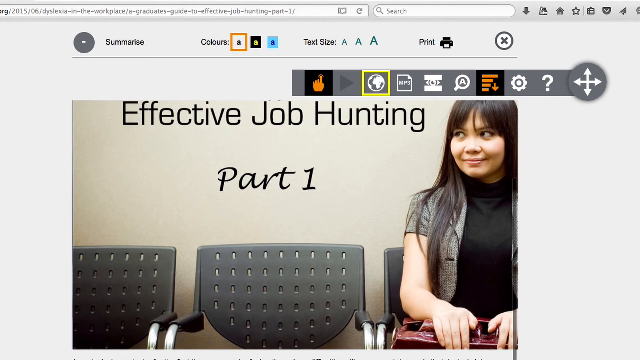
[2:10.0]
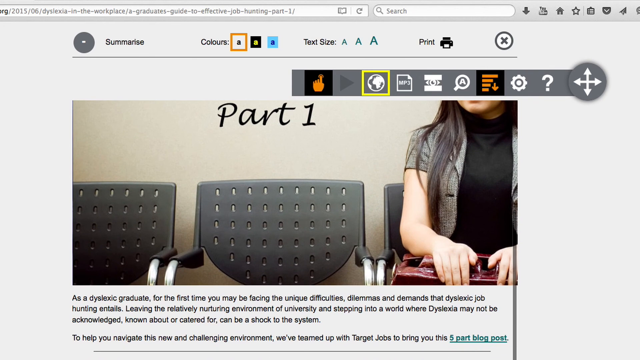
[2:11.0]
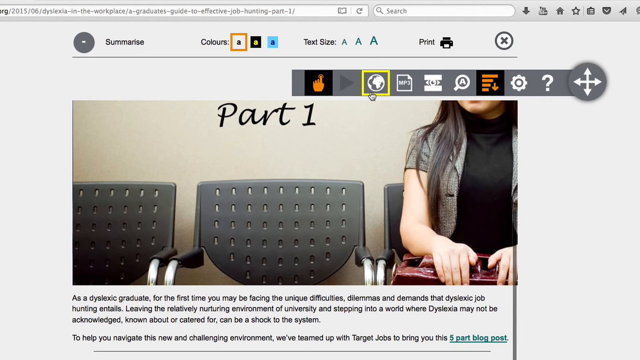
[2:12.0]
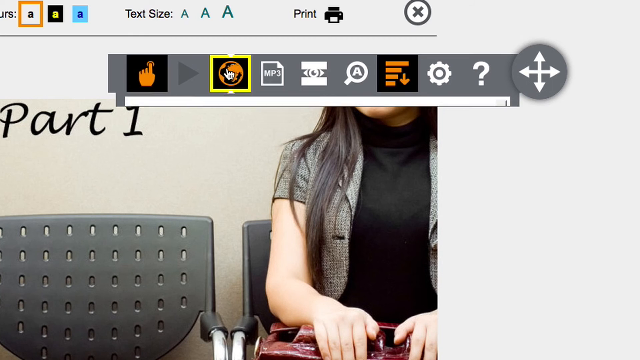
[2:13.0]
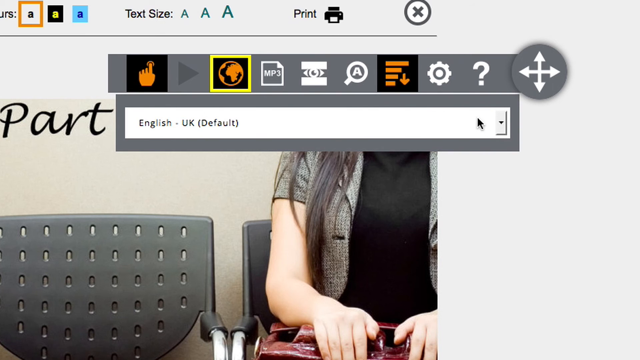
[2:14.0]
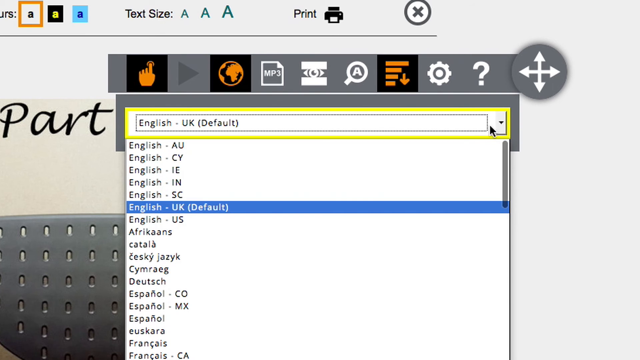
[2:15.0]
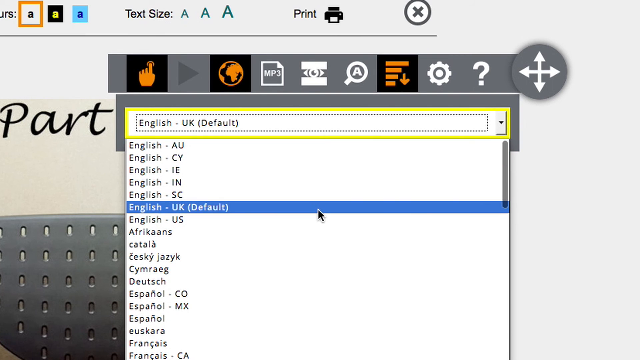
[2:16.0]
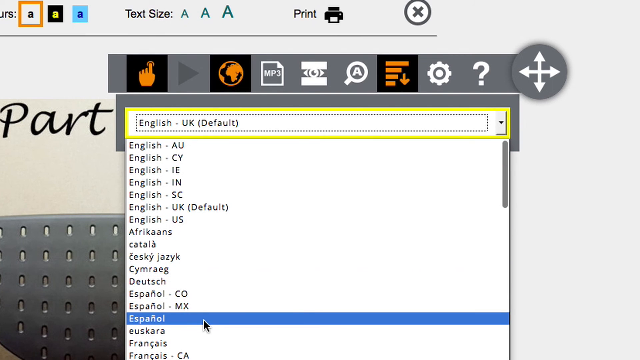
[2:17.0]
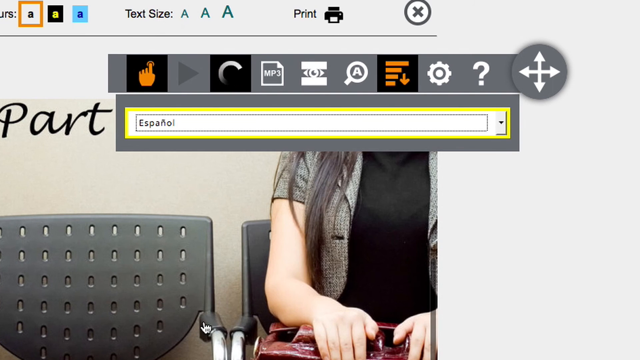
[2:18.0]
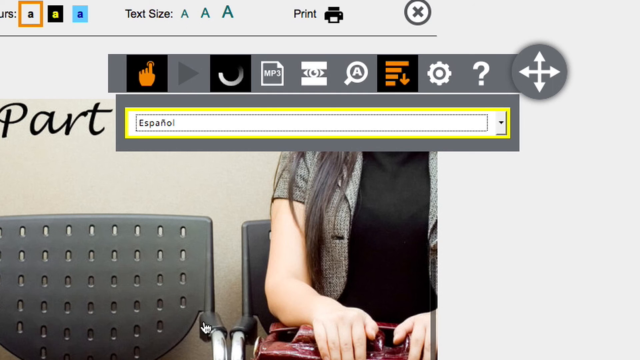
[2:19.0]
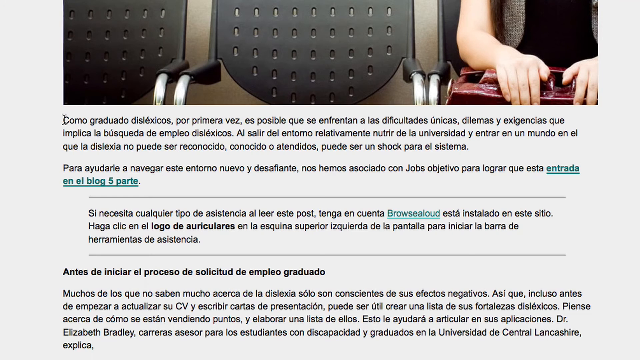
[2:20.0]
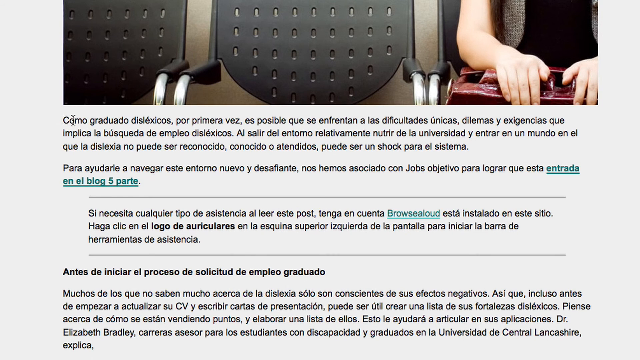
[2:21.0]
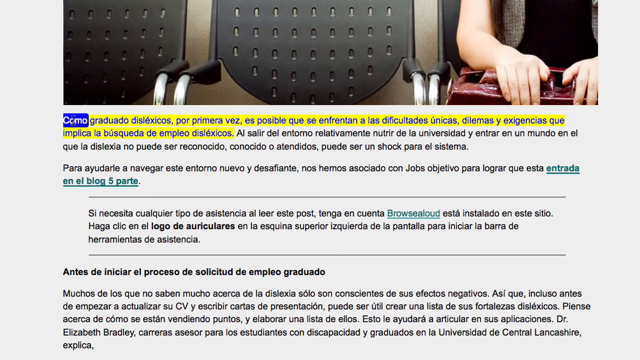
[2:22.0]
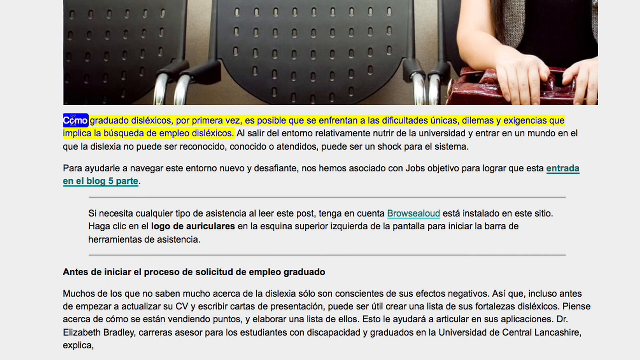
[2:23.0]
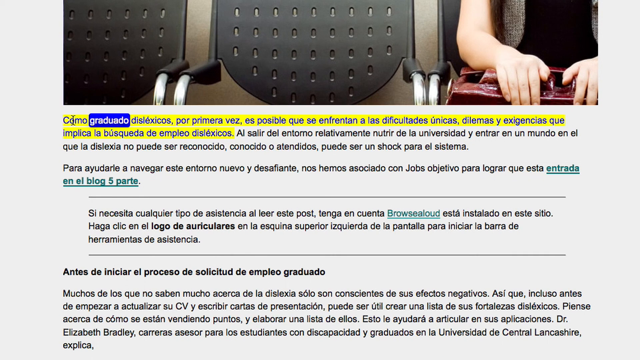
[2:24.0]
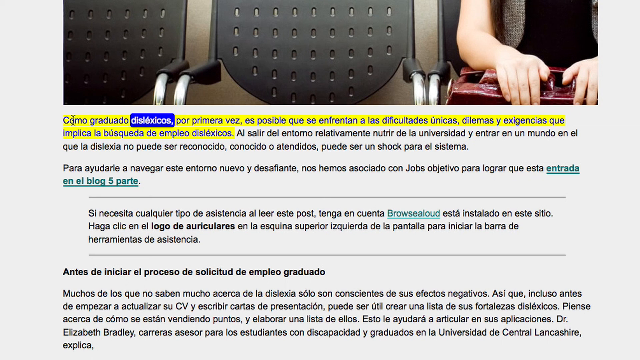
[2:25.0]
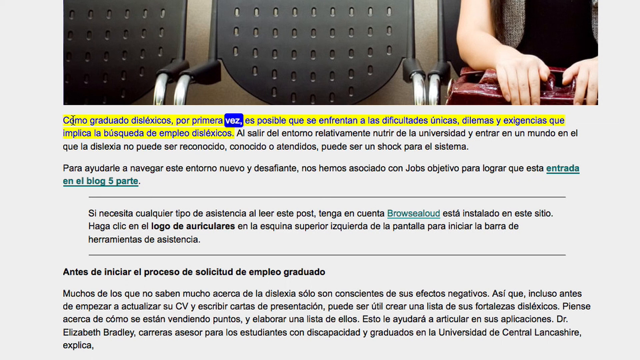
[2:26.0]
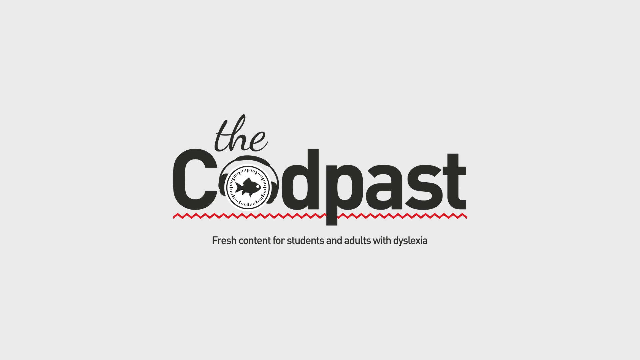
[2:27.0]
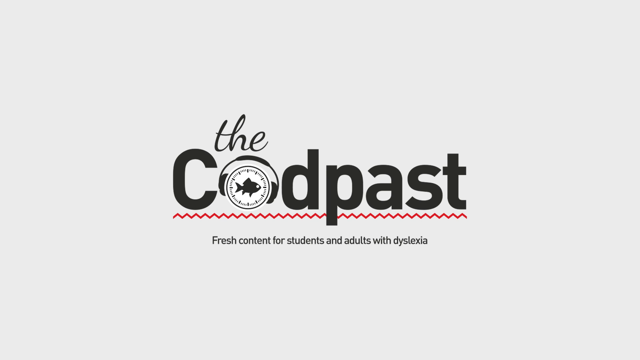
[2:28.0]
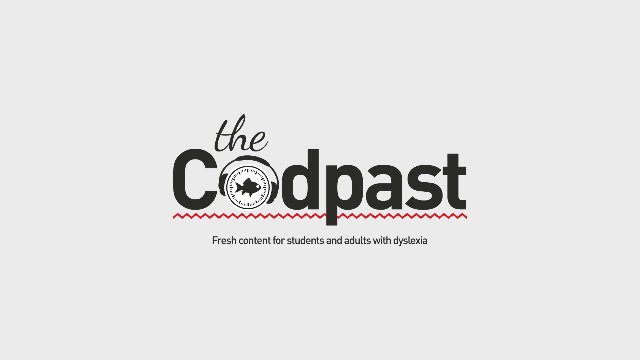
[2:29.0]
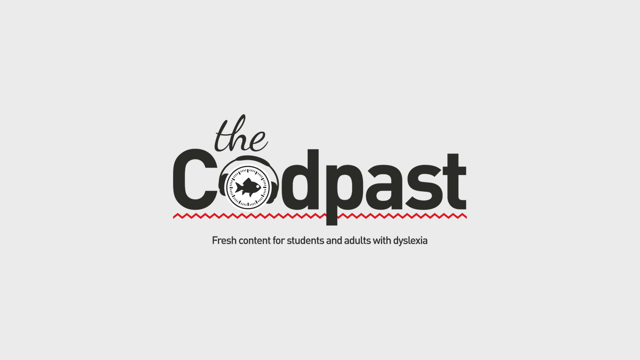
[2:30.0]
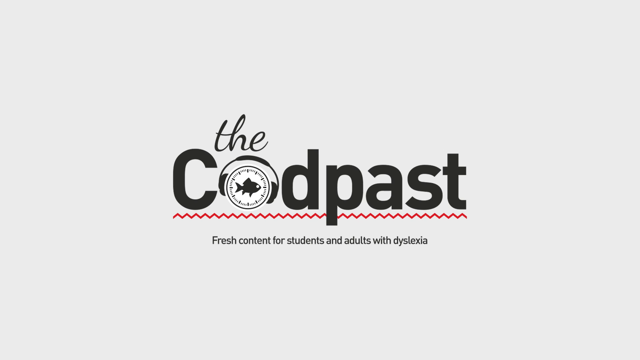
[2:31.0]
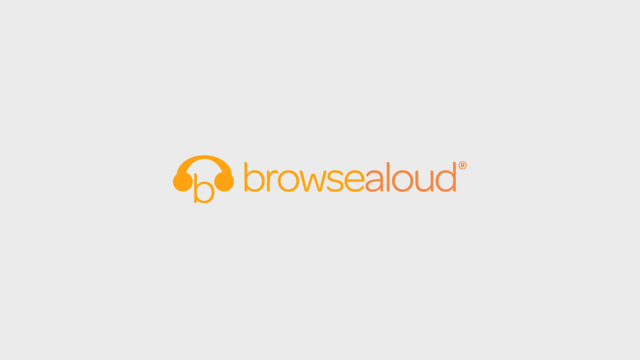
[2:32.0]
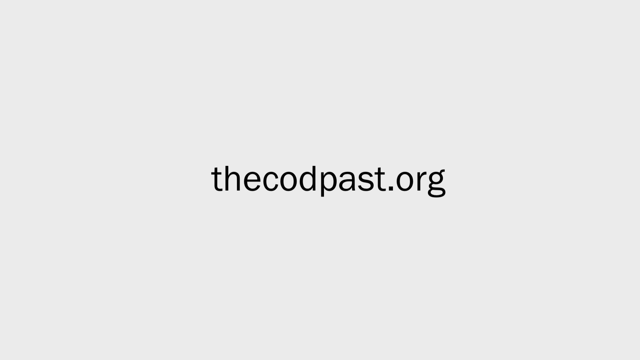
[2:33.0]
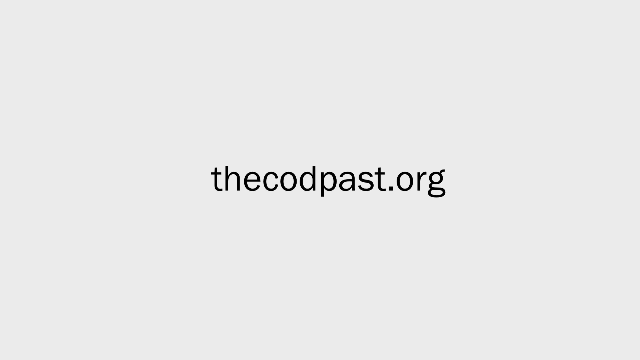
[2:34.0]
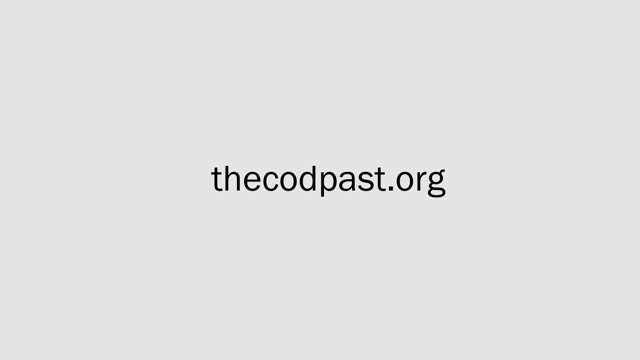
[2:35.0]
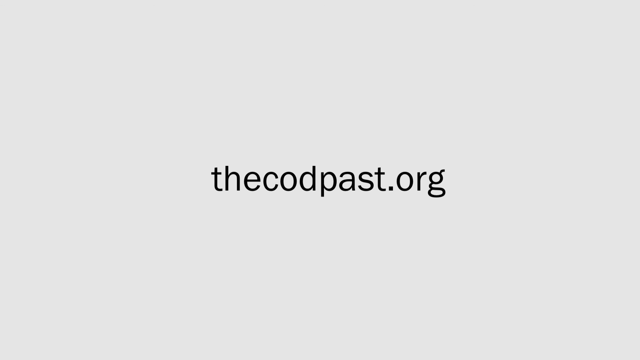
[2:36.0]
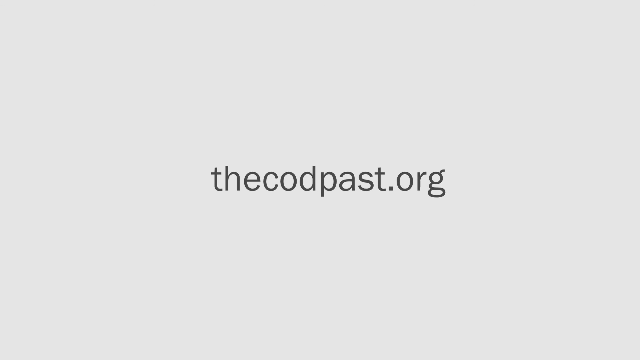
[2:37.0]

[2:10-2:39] The person is now on a new article titled "A Graduate's Guide to Effective Job Hunting, Part 1." At the bottom right of the title is an image of a woman with long dark brown hair wearing a gray jacket, sitting on a chair. They scroll down, showing that she is sitting on a black chair with other chairs next to her. Below, the article says: "As a dyslexic graduate, for the first time, you may be facing the unique difficulties, dilemmas, and demands that dyslexic job hunting entails. Leaving the relatively nurturing environment of university and stepping into a world where dyslexia may not be acknowledged, known about, or catered for can be a shock to the system."